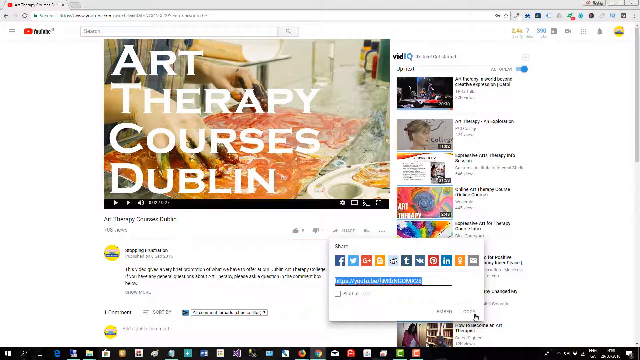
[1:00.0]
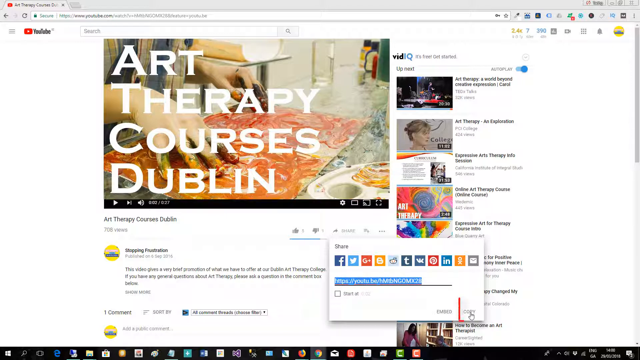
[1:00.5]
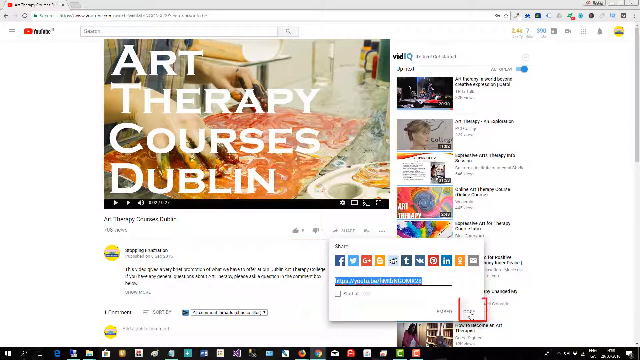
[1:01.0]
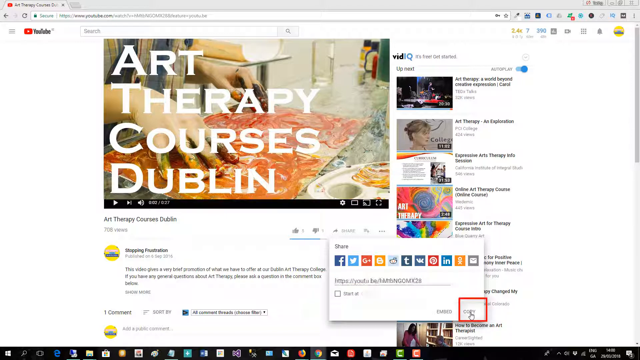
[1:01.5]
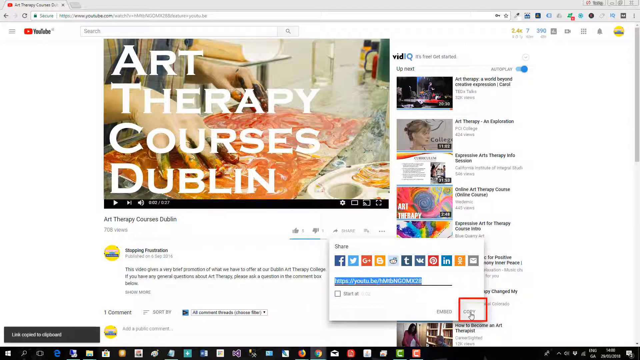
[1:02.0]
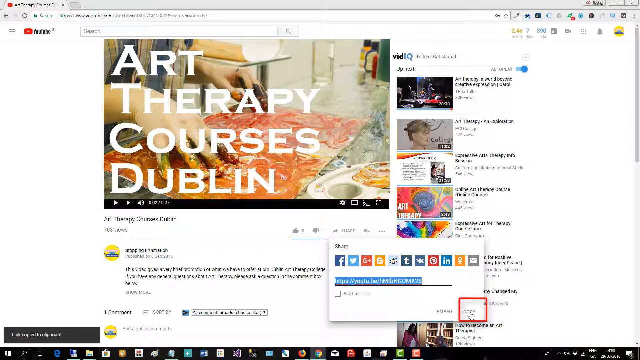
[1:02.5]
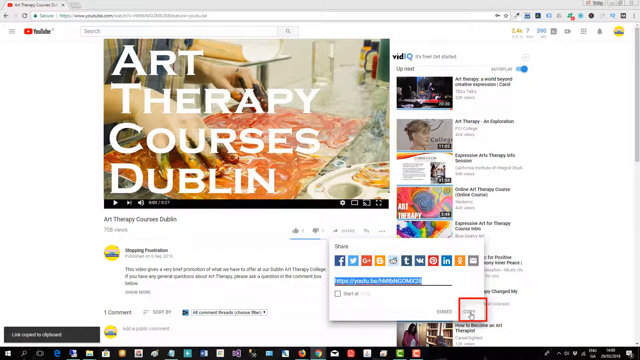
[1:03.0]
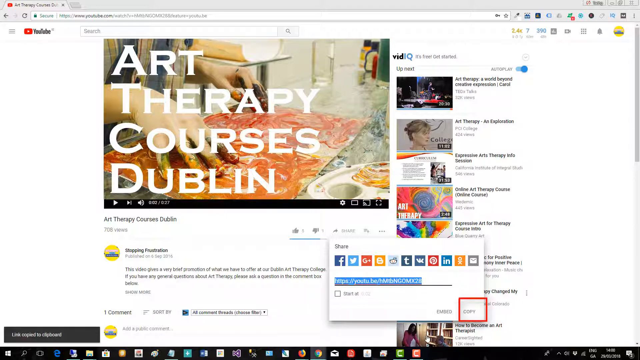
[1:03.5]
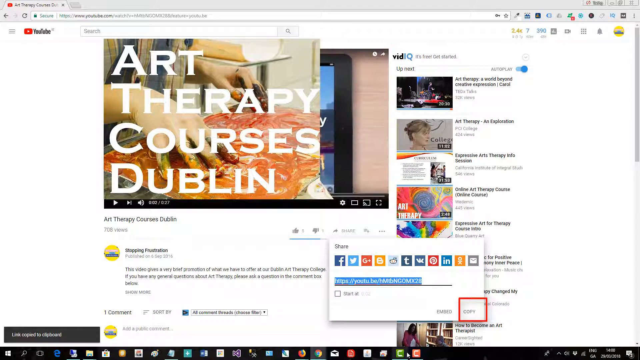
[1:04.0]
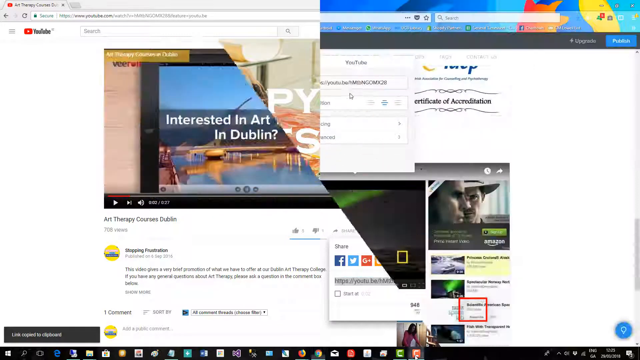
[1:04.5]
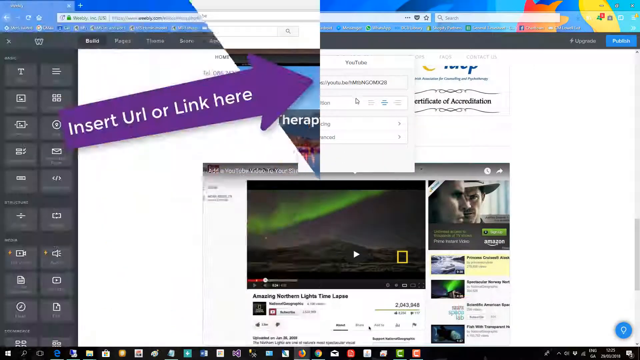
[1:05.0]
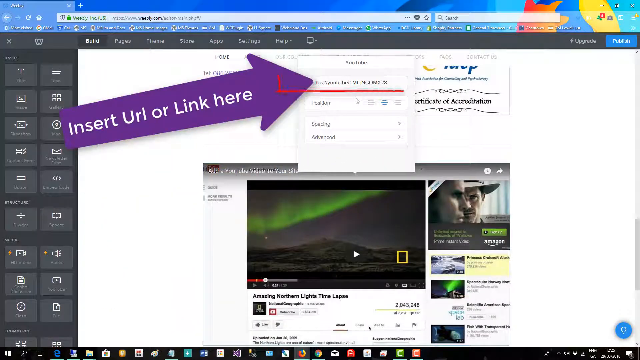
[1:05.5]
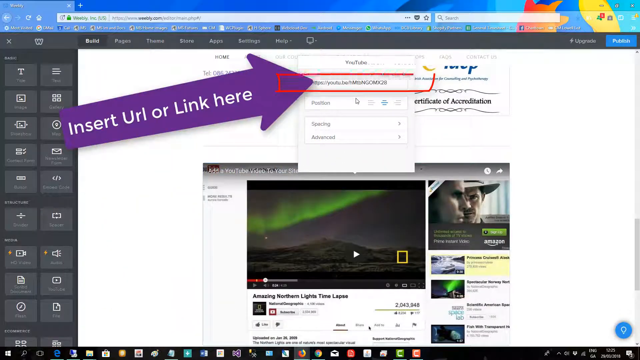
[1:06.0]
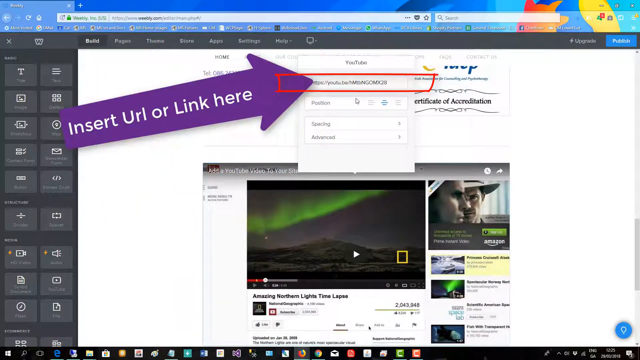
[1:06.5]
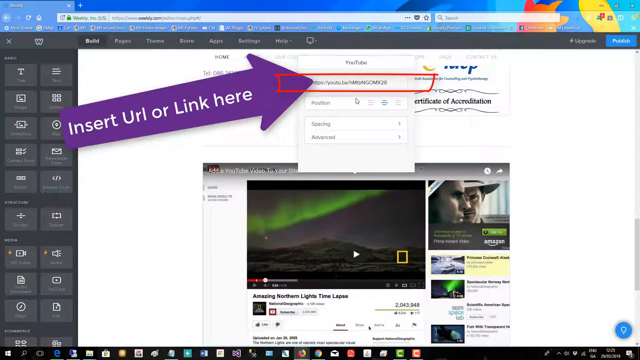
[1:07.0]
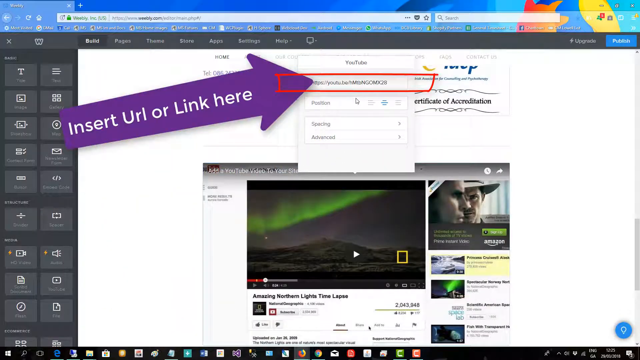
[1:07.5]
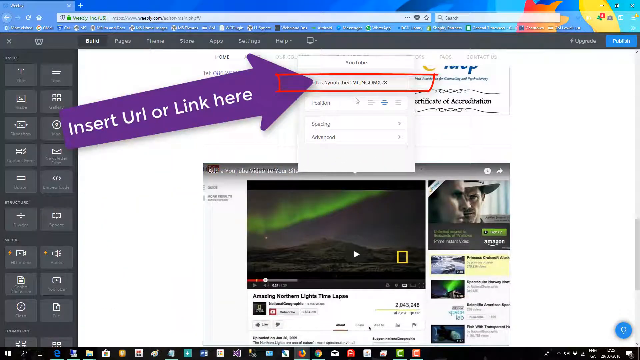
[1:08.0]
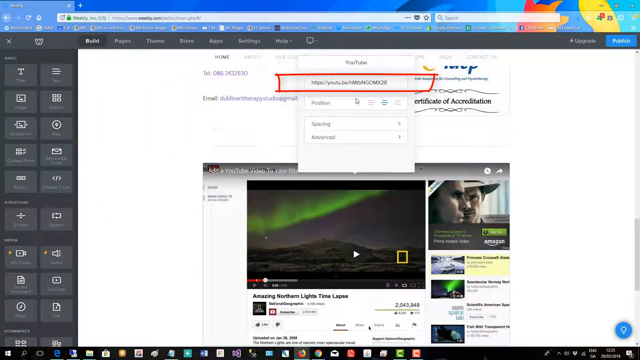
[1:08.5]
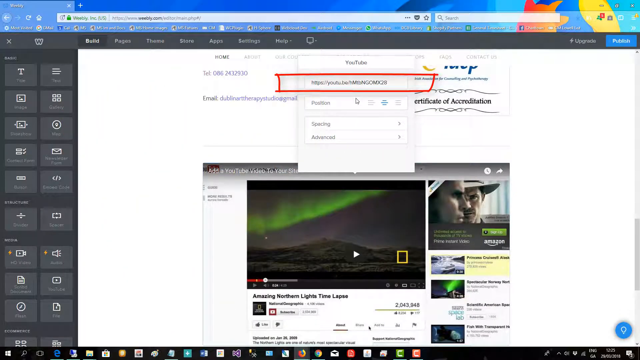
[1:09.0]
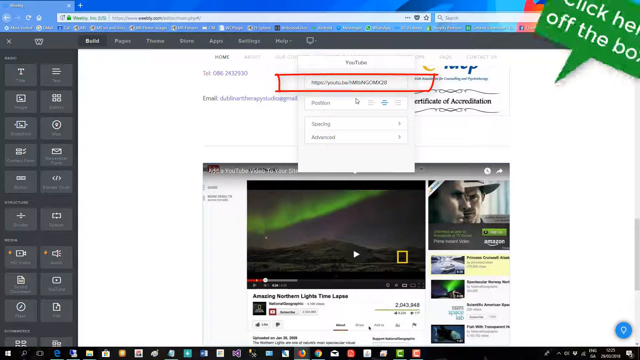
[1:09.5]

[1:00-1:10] A YouTube page shows many videos with their titles, and a small field below has the text "share." Sharing options appear, including Facebook, Twitter, Google, LinkedIn and email, with a link displayed below those symbols for copying. The page then goes back to the arrow pointing at YouTube that shows how to copy the link and paste it to another site.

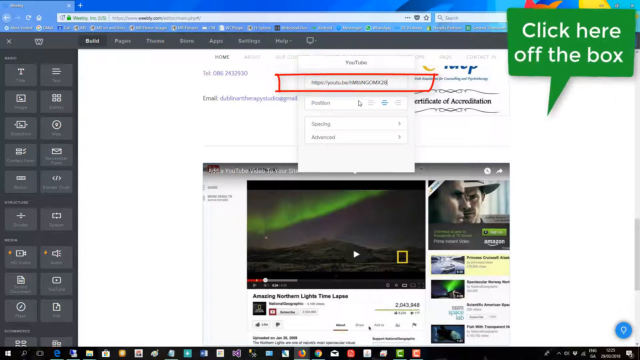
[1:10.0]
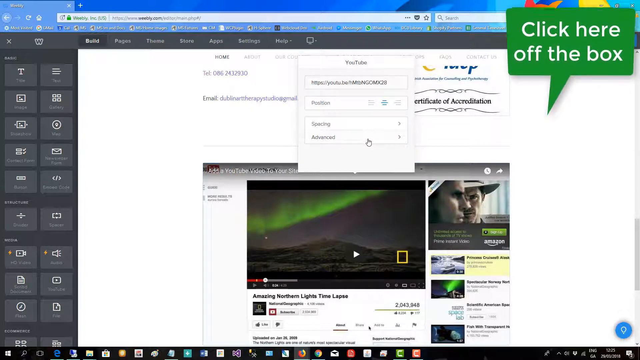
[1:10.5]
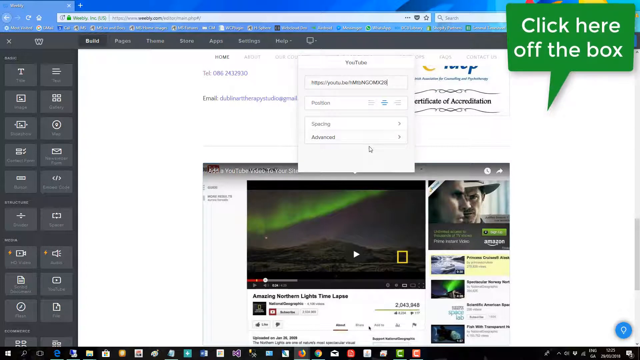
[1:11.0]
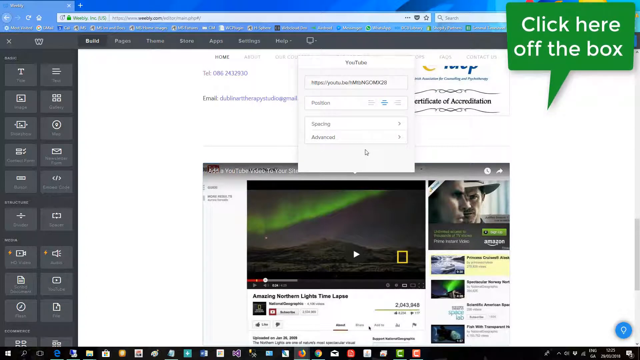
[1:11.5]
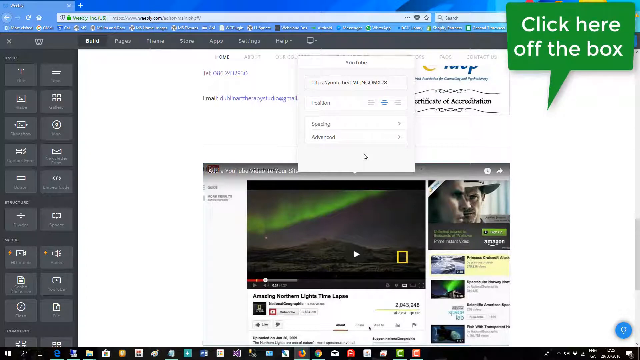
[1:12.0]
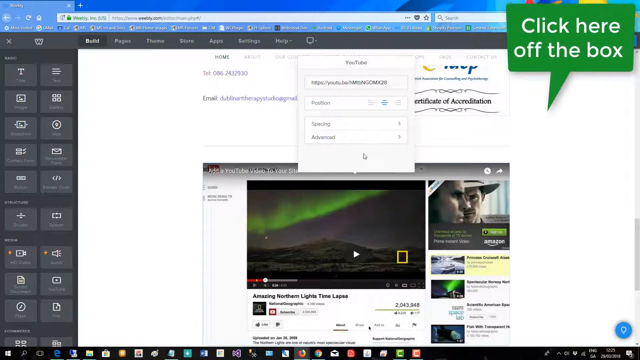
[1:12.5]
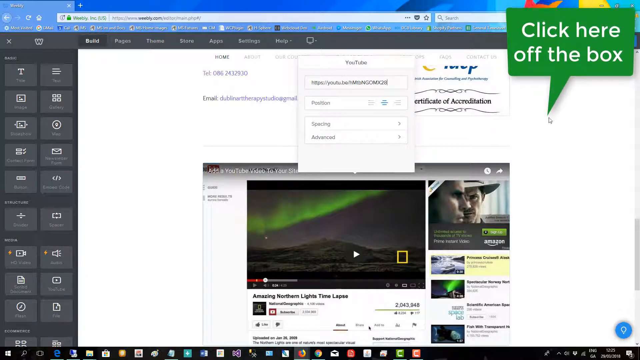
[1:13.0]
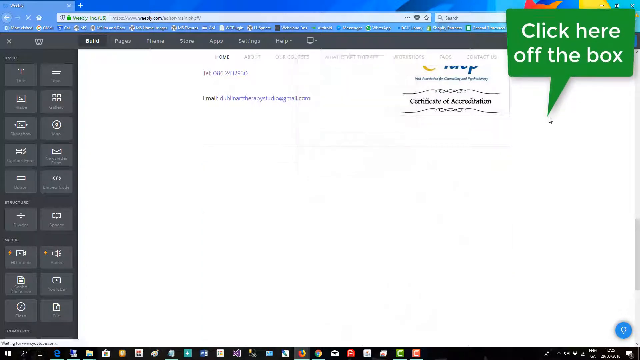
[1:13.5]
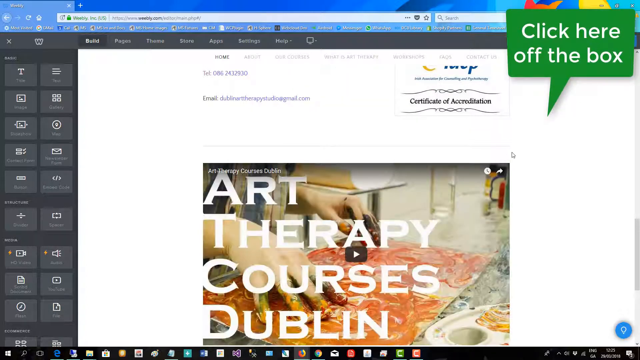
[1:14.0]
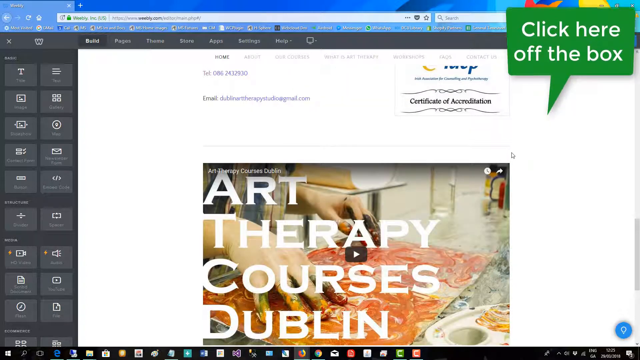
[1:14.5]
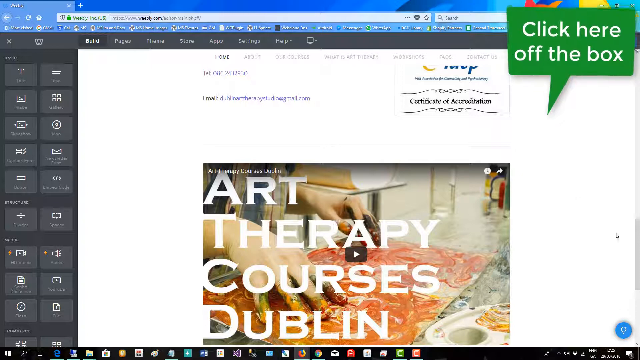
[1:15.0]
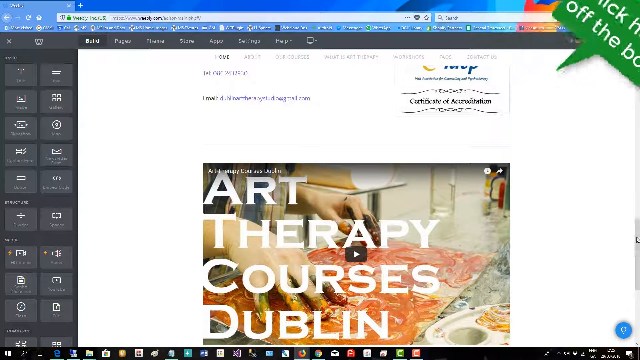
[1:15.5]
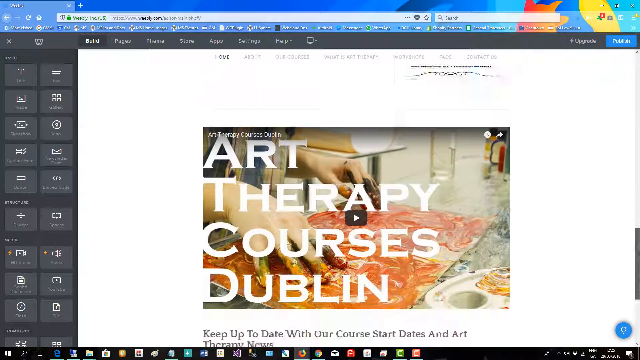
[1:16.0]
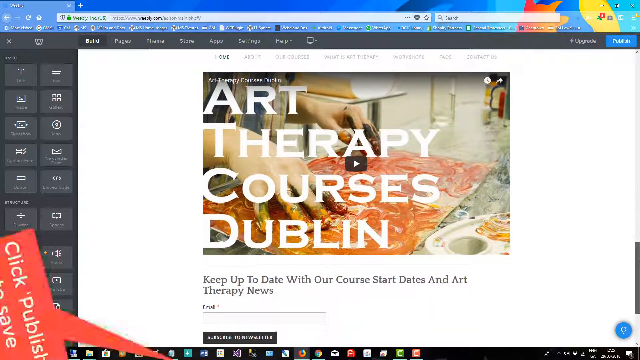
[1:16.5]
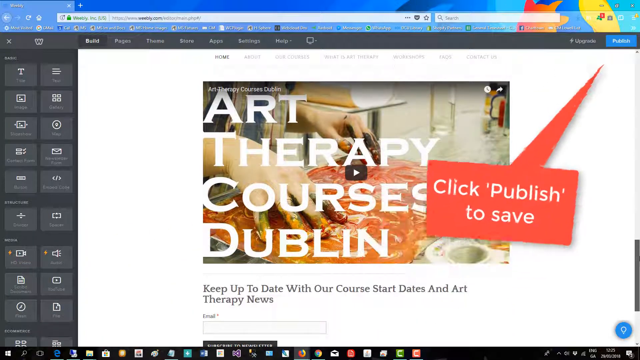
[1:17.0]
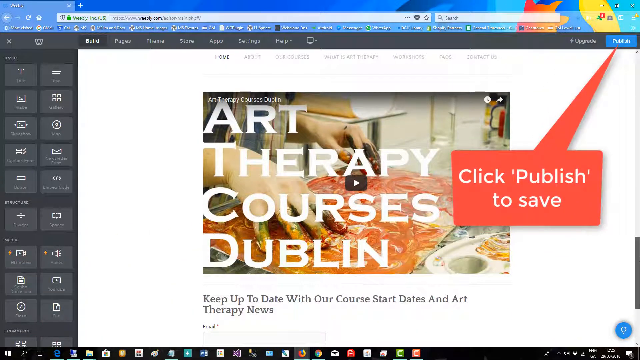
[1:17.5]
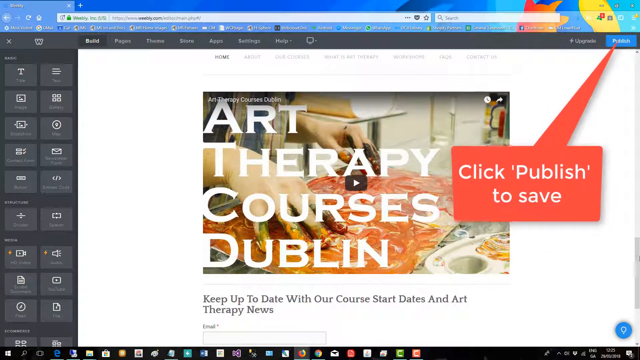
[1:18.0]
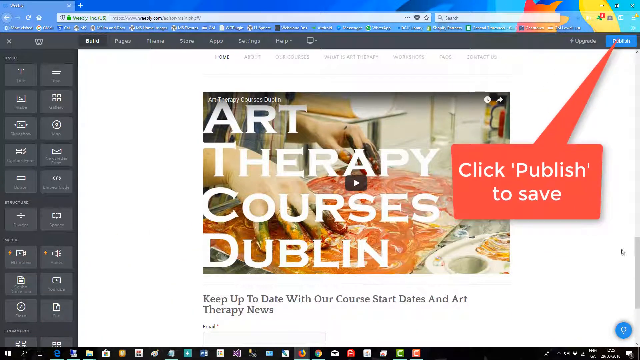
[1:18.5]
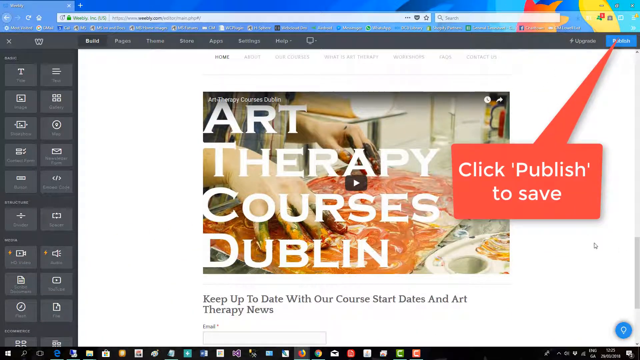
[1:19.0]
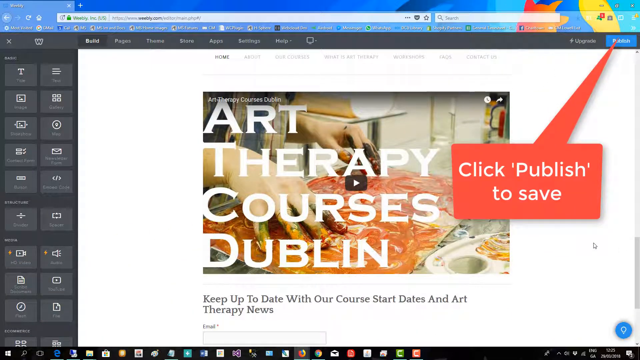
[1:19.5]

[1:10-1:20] A page with many fields is shown; the field below has a video on it on a YouTube page. Above that video is a field showing YouTube and a URL link, with some information in it. In the top right corner is a green box with white text reading "click here." The view changes to a paused video with a YouTube symbol in the middle and white text reading "Art Therapy Courses Dublin," and an arrow points to "publish to save."